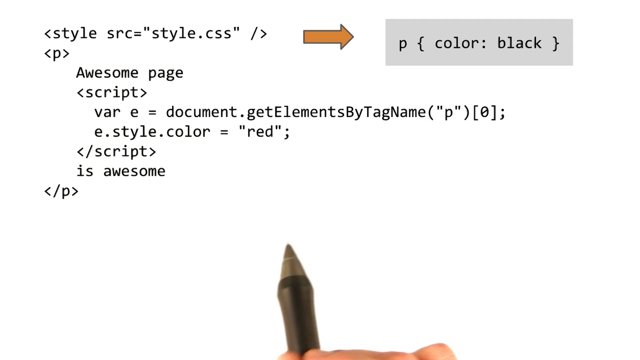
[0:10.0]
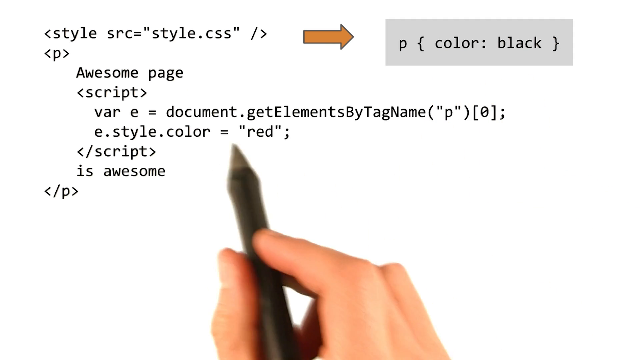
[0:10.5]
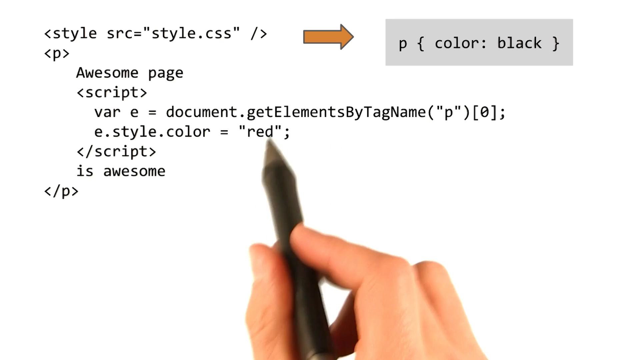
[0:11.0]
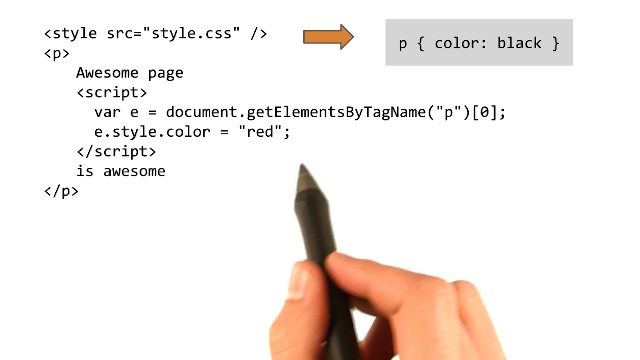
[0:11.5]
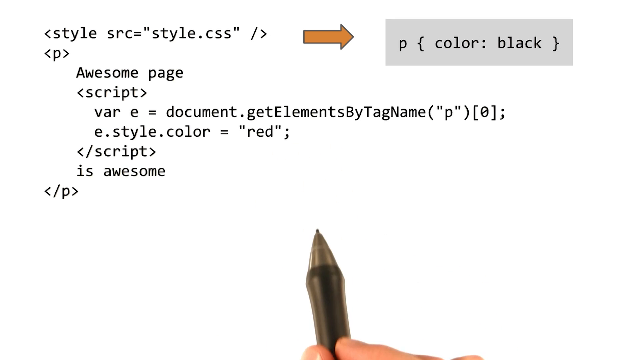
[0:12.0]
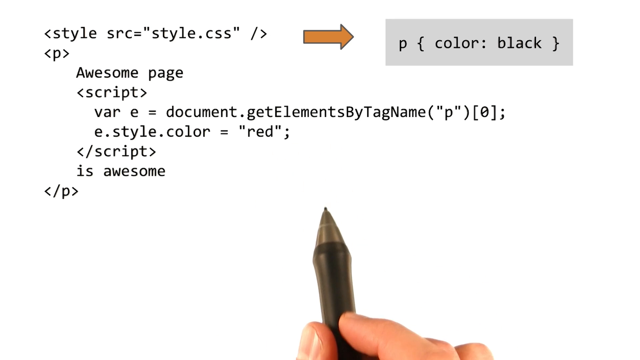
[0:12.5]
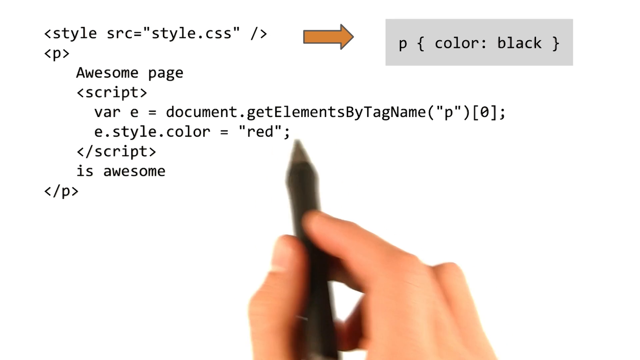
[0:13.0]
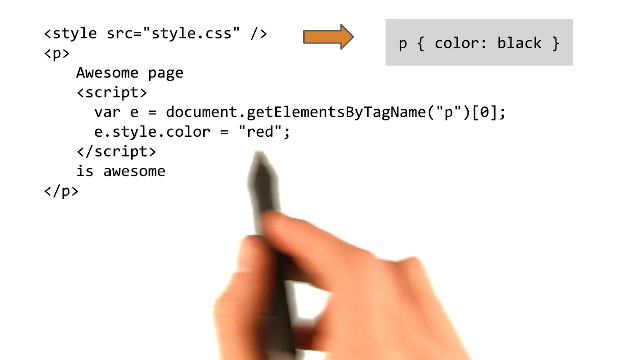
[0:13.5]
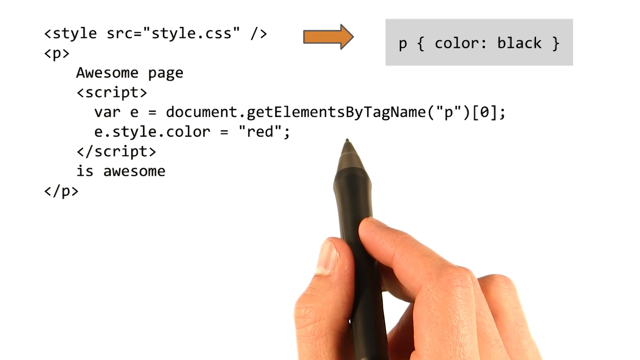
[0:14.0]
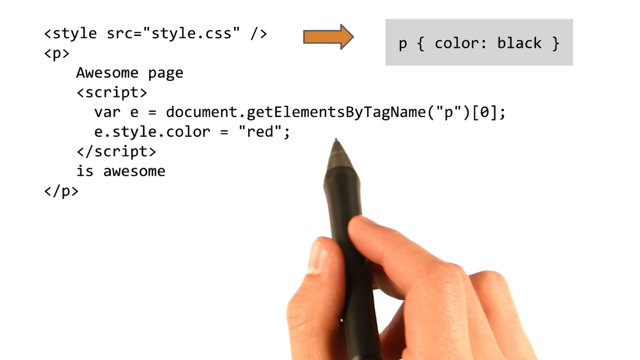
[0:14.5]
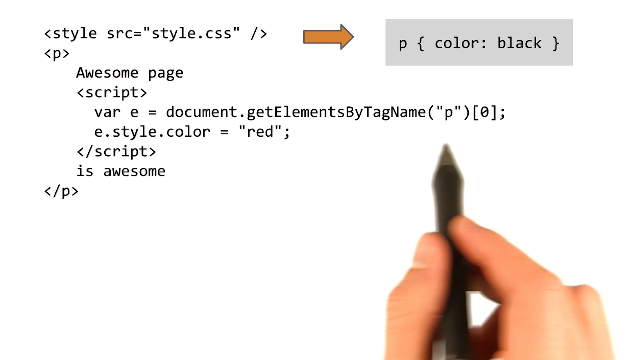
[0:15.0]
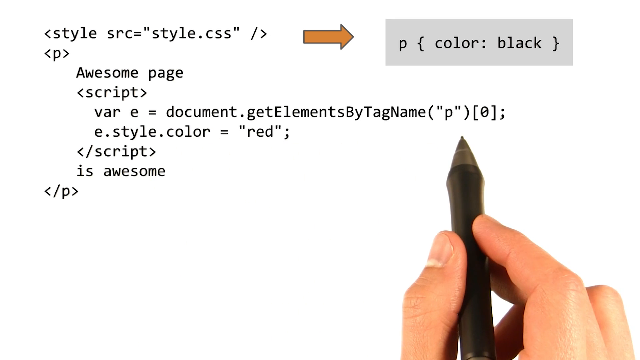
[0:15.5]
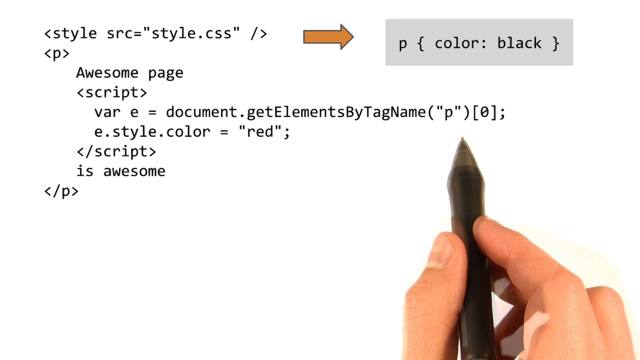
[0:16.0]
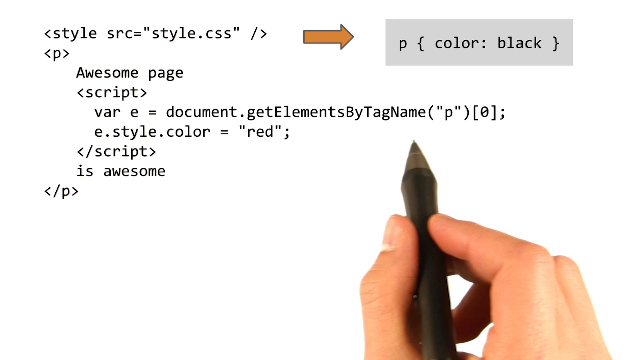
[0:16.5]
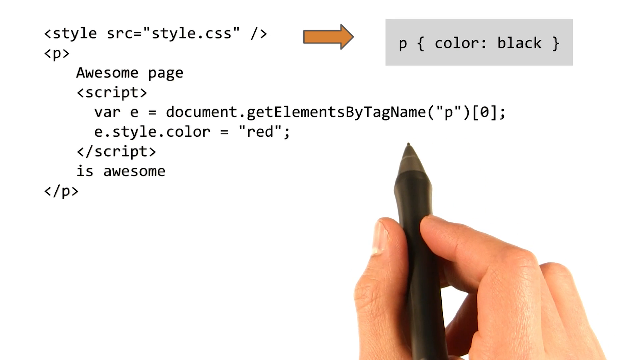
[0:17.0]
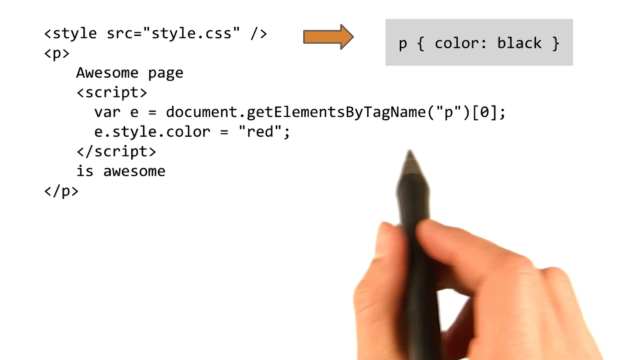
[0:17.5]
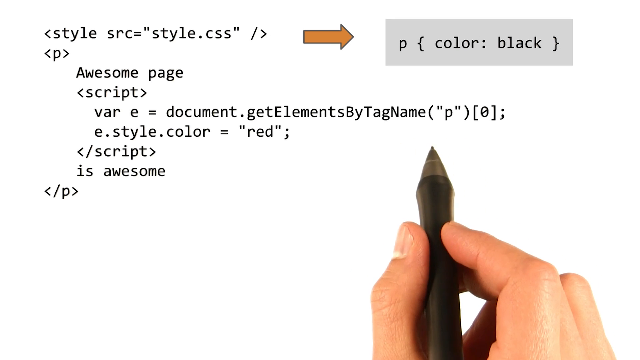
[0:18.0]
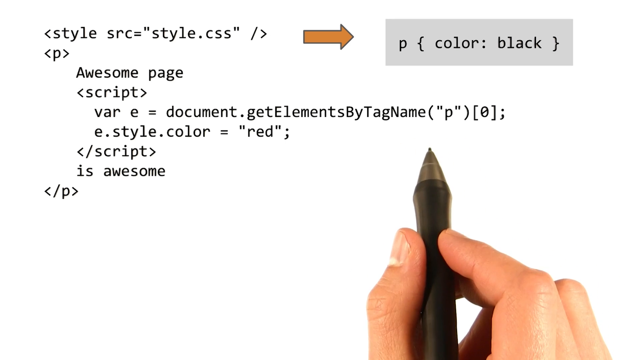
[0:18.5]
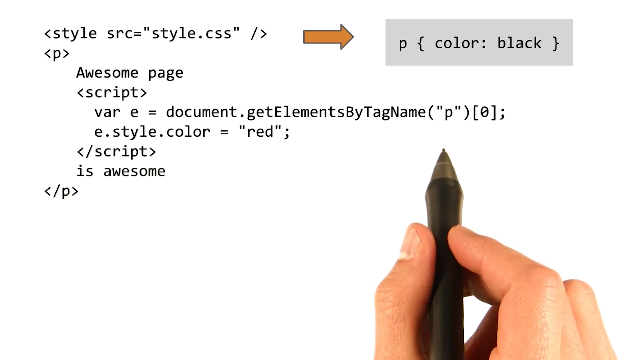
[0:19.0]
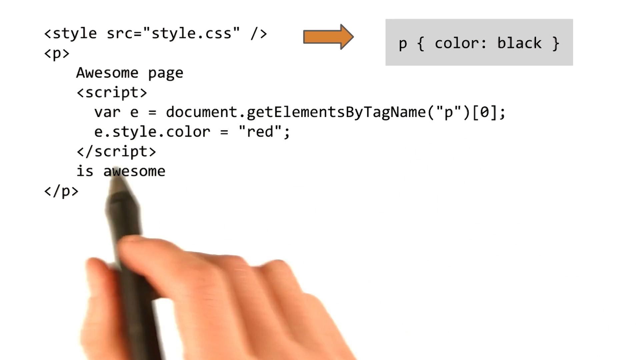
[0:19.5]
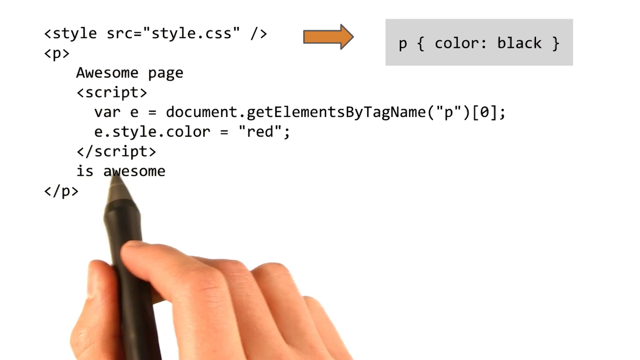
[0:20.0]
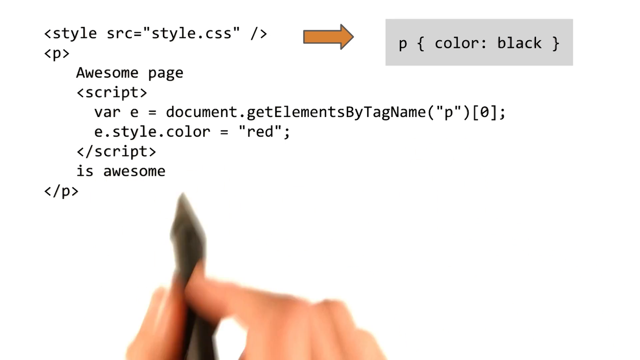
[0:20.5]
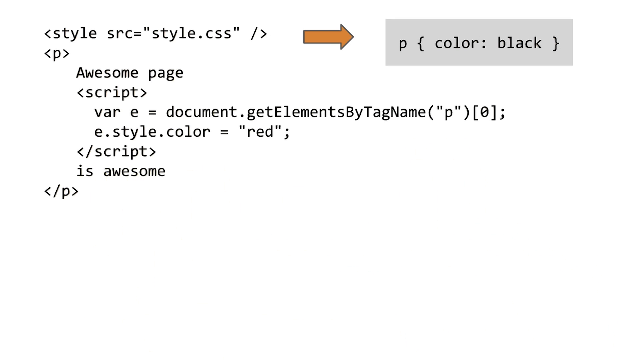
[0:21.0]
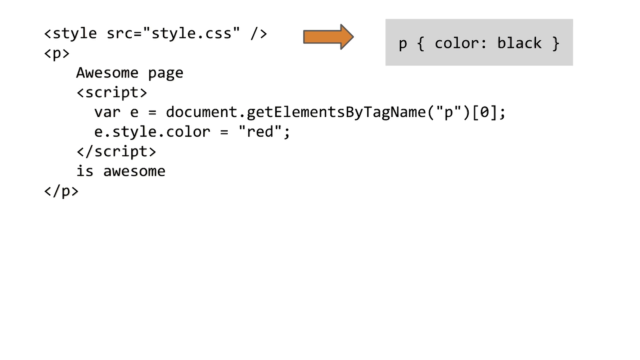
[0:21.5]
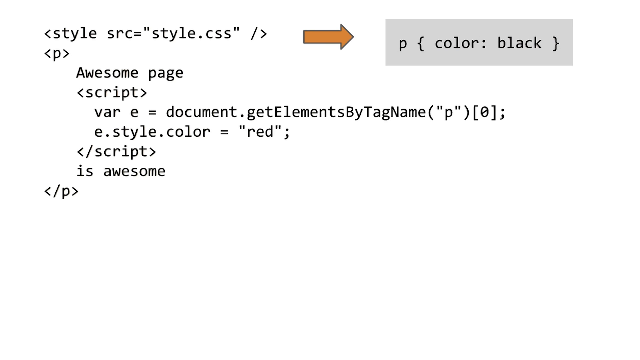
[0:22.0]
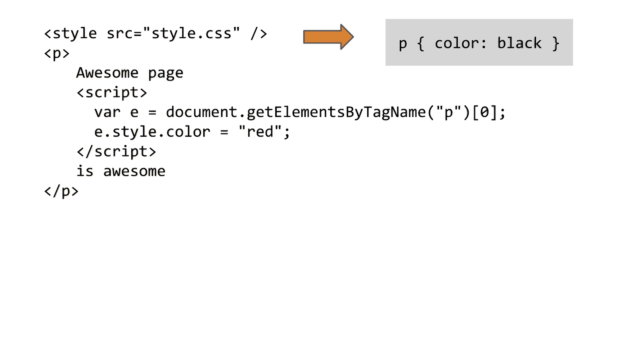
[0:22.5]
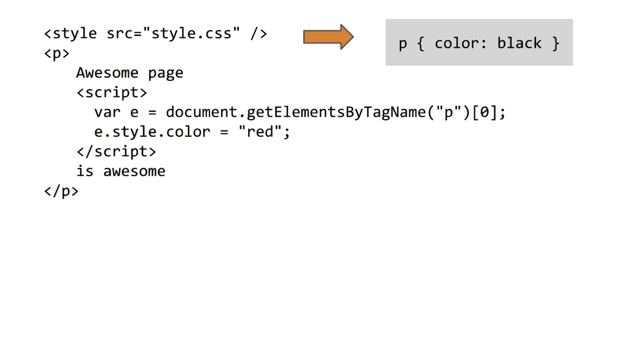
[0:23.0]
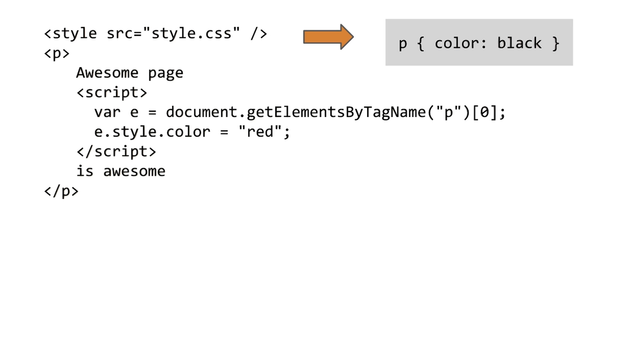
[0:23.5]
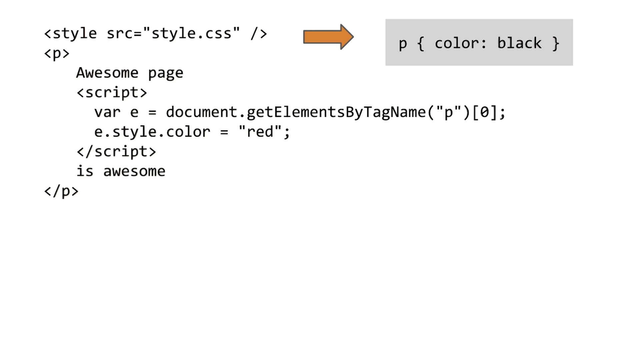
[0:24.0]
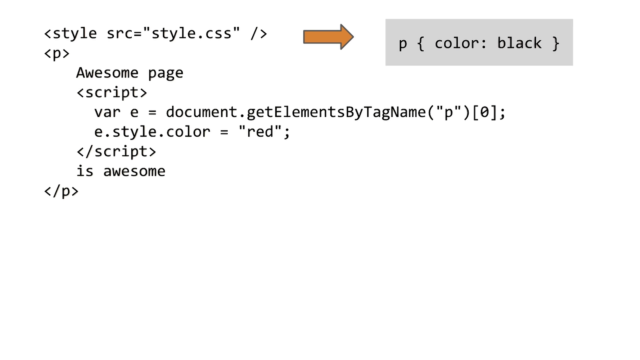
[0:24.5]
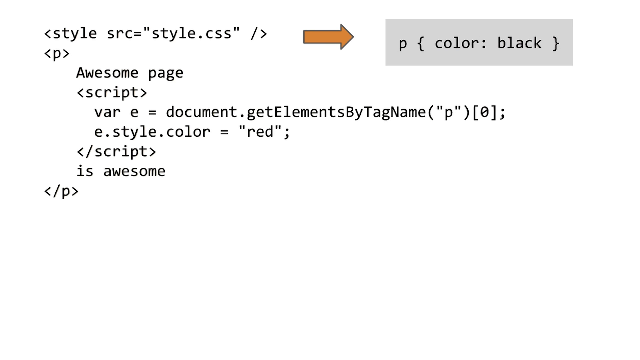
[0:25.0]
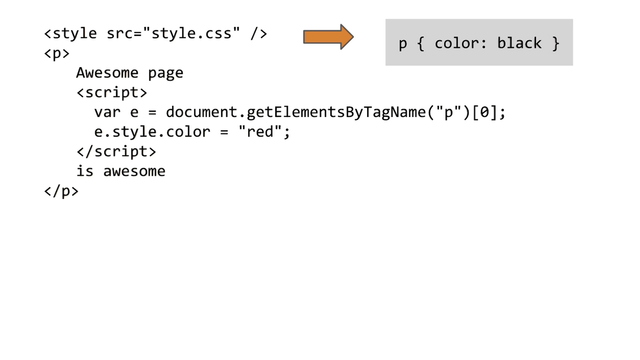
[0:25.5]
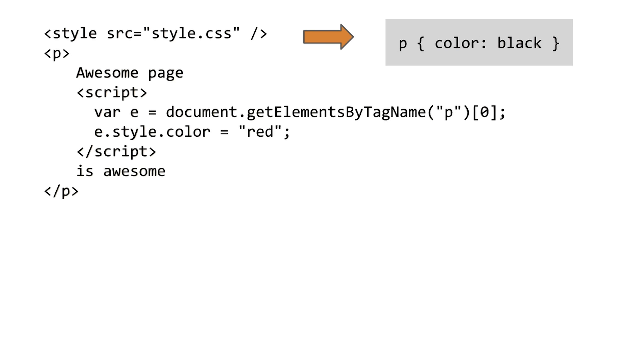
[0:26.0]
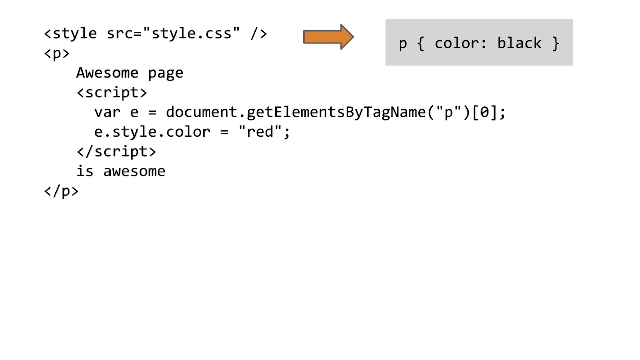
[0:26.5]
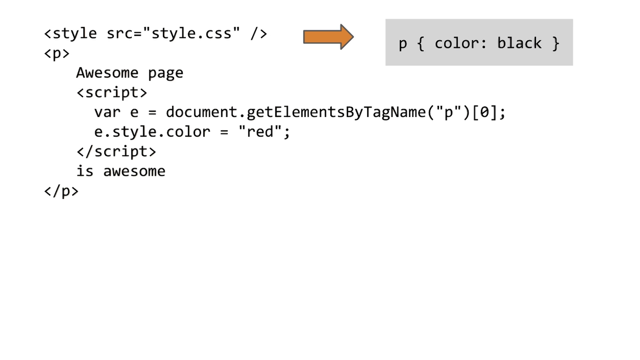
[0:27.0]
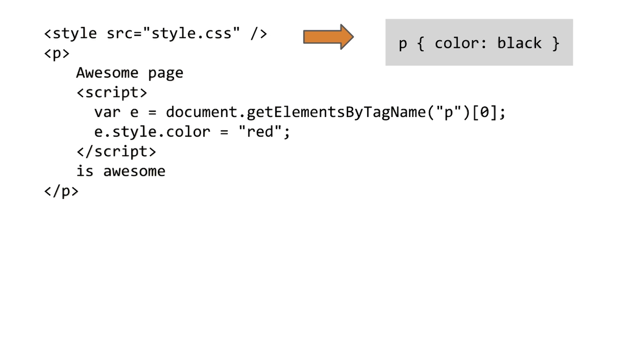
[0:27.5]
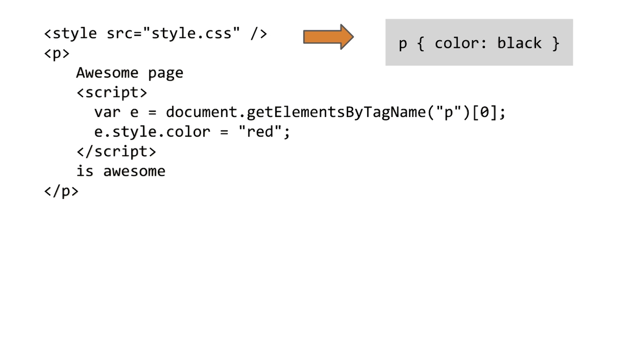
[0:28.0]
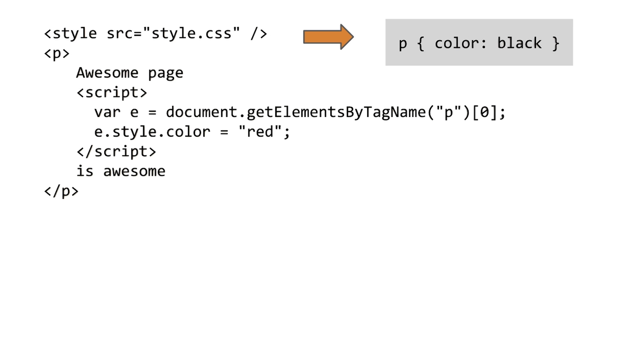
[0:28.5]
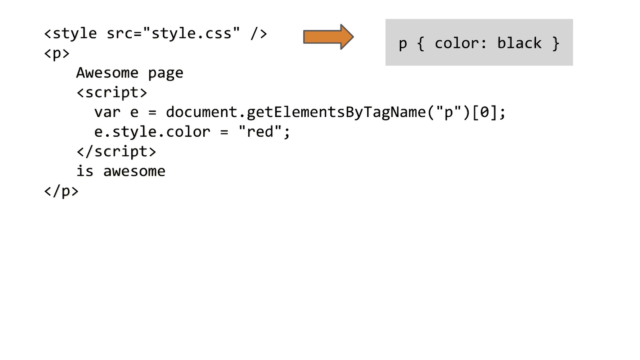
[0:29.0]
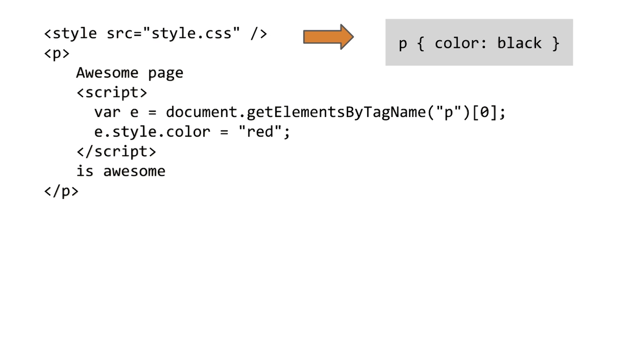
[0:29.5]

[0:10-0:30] The white background remains, and this time the hand appears faster: a white man's hand with a black pen points at the code "var e = document.getElementsByTagName ("p")[0]", "e.style.color = "red" ;" and "</script>". He mostly points at the part that says "red", which suggests the code may have something to do with changing colors. He goes through each section slowly.